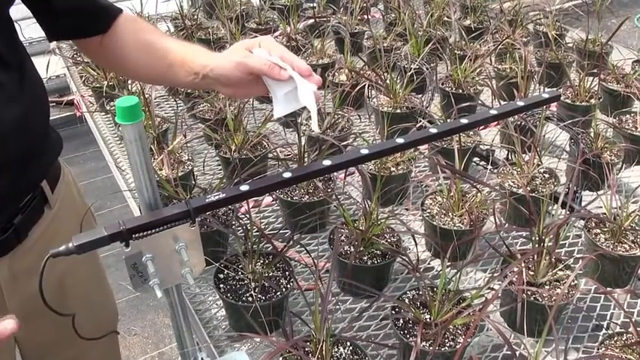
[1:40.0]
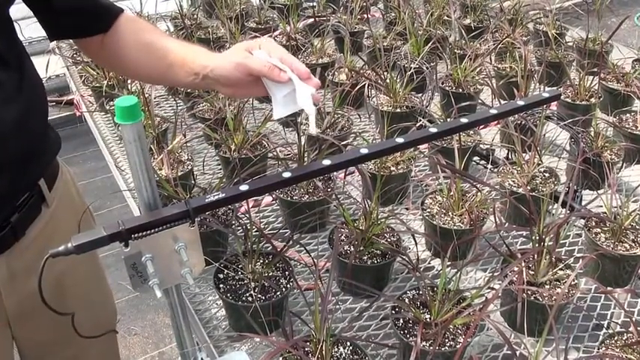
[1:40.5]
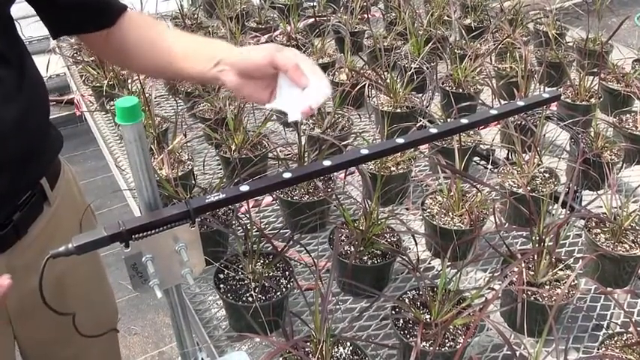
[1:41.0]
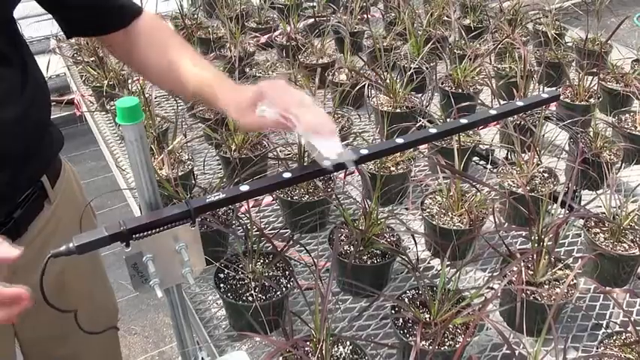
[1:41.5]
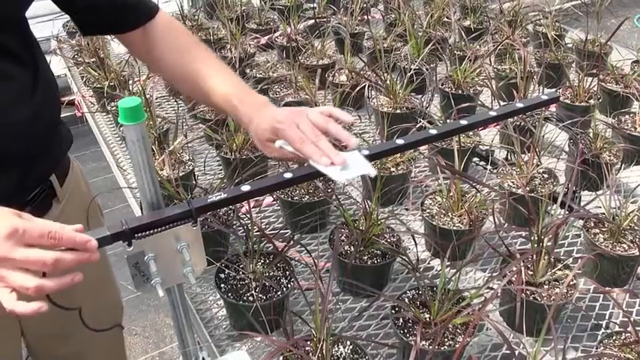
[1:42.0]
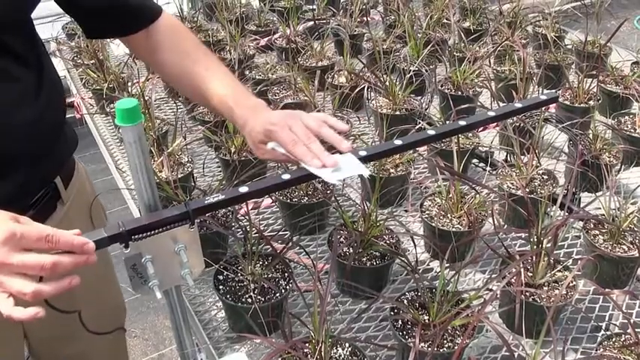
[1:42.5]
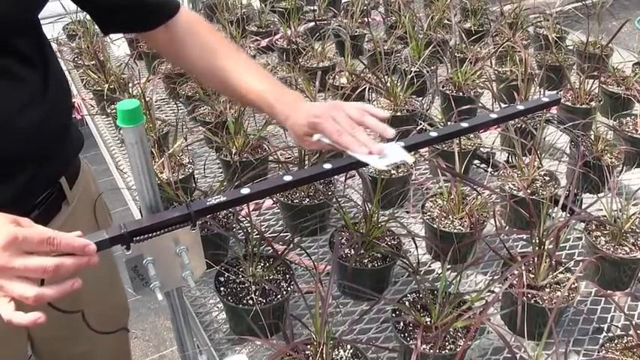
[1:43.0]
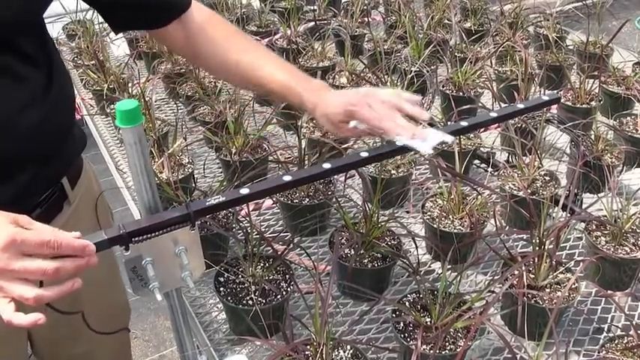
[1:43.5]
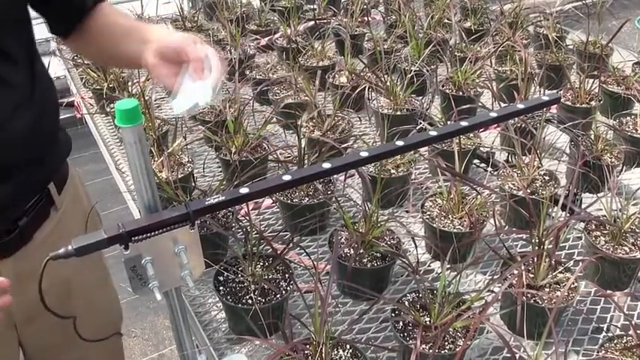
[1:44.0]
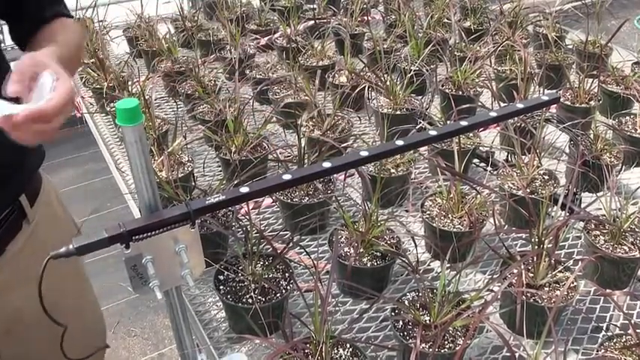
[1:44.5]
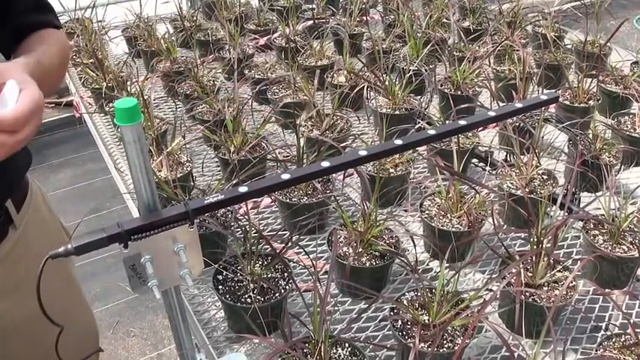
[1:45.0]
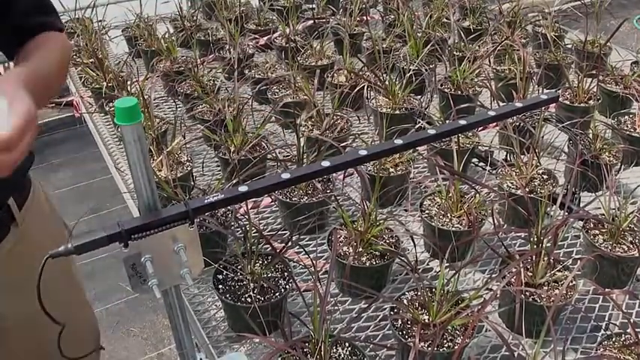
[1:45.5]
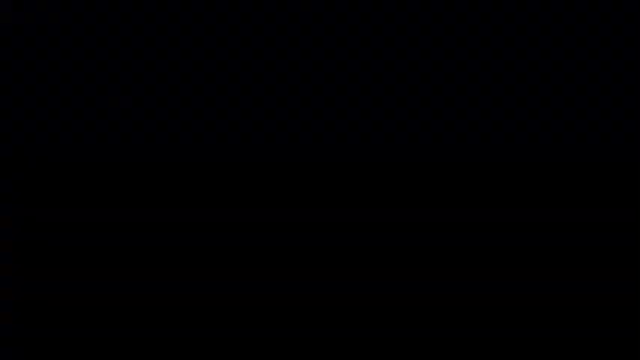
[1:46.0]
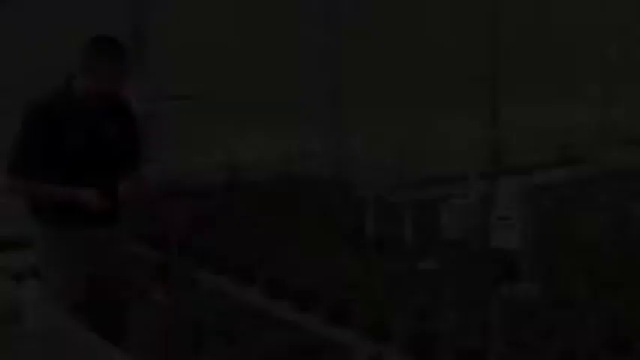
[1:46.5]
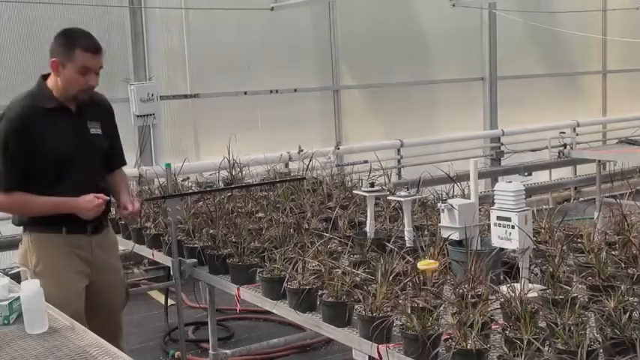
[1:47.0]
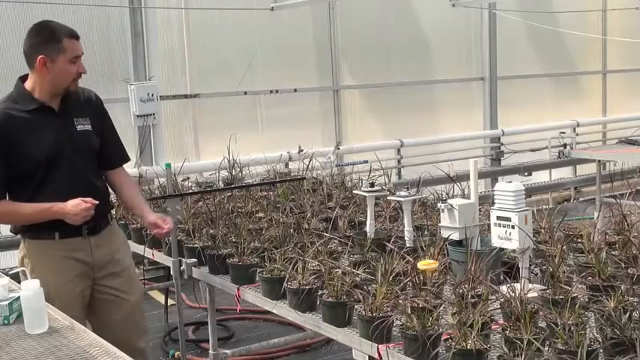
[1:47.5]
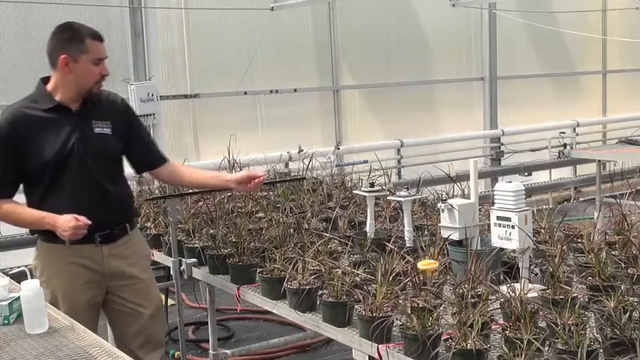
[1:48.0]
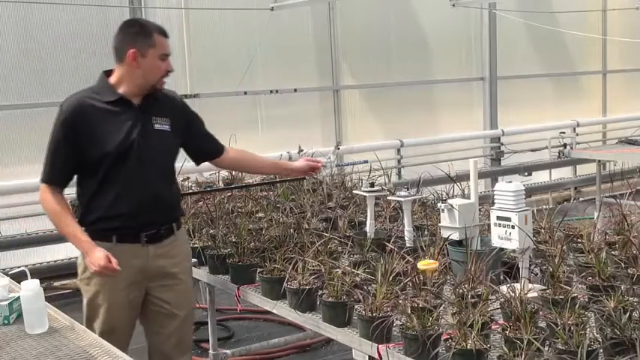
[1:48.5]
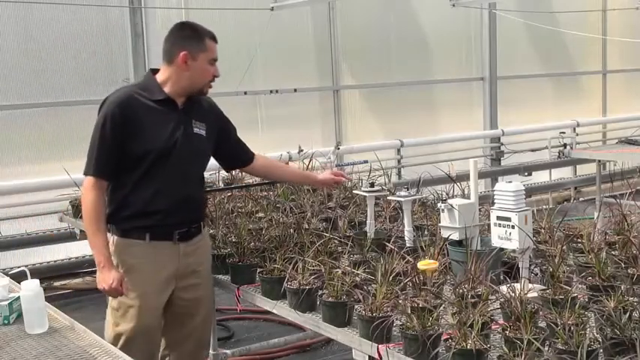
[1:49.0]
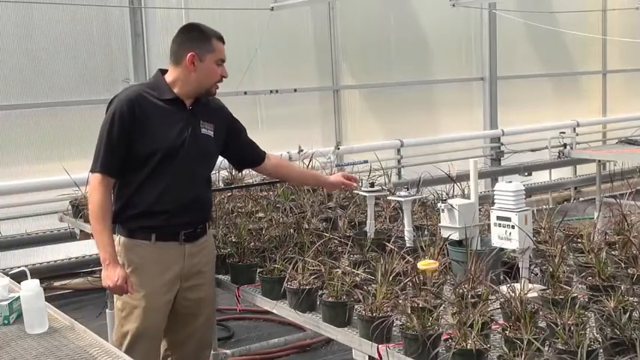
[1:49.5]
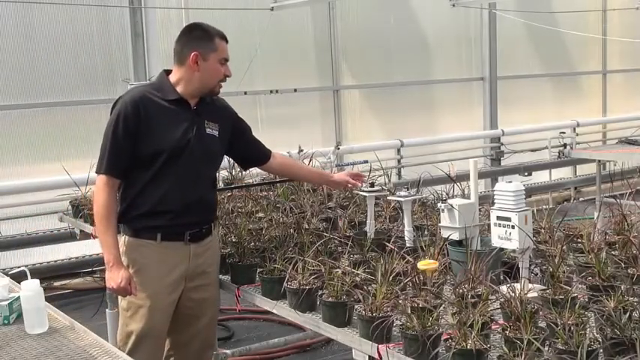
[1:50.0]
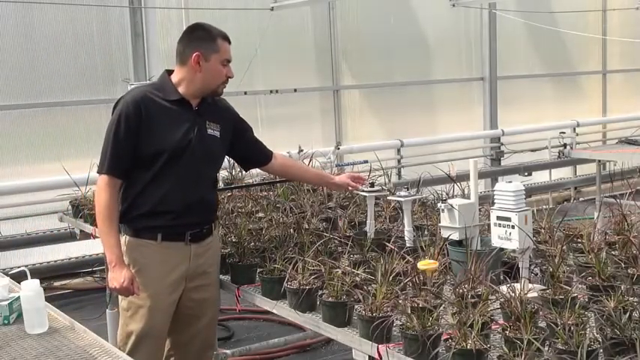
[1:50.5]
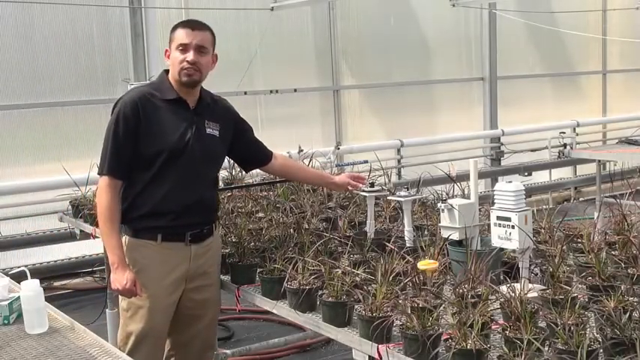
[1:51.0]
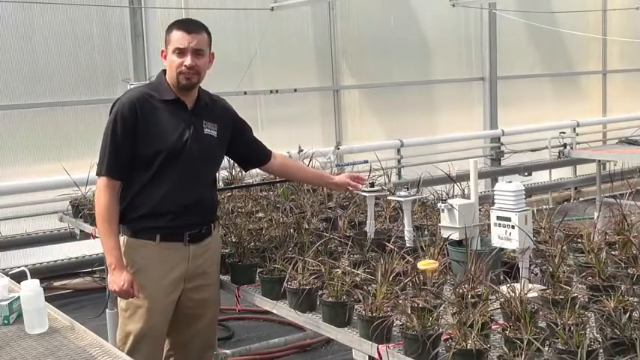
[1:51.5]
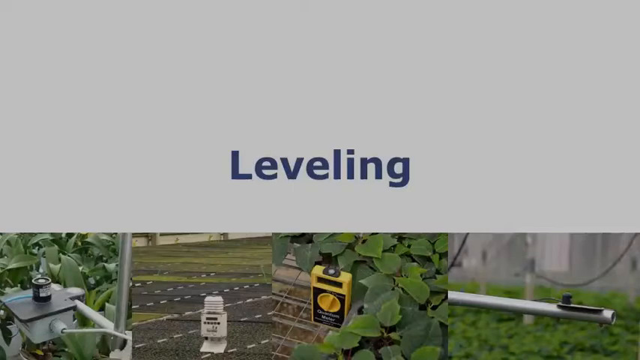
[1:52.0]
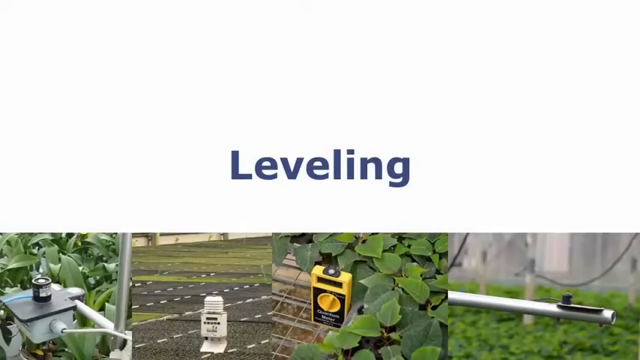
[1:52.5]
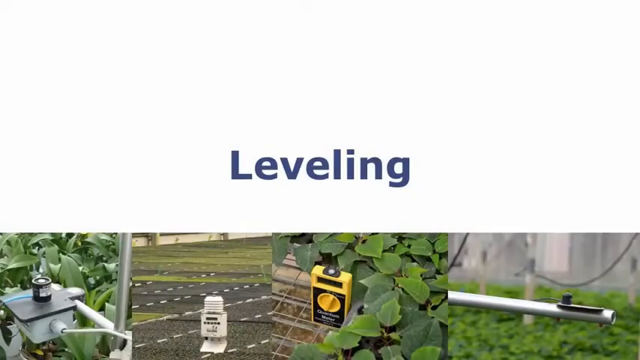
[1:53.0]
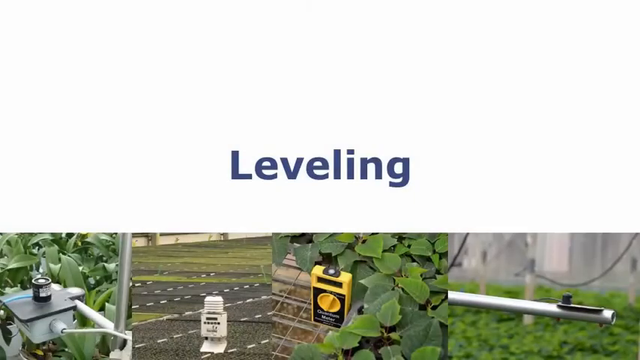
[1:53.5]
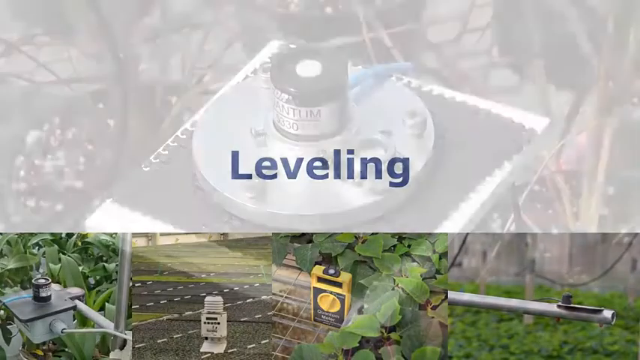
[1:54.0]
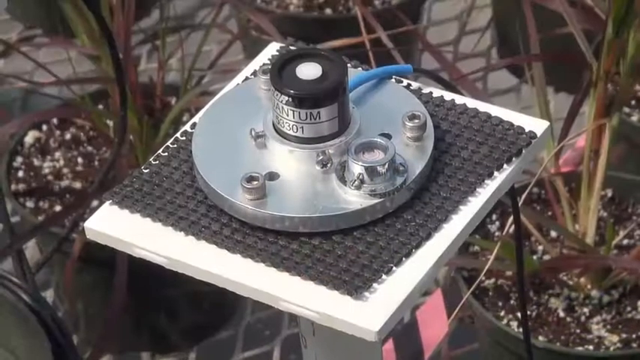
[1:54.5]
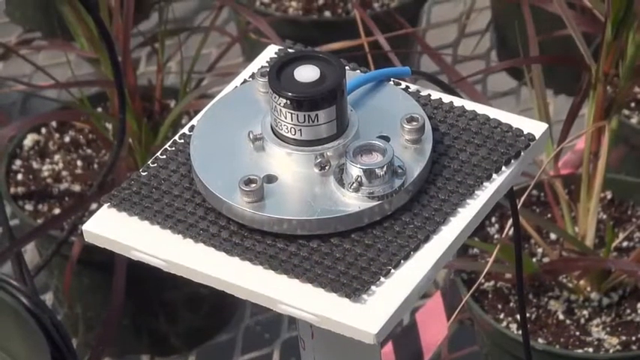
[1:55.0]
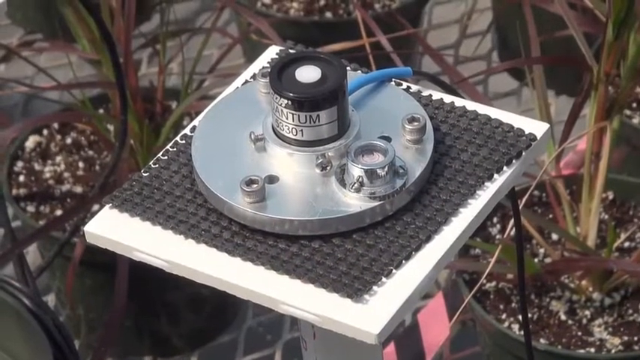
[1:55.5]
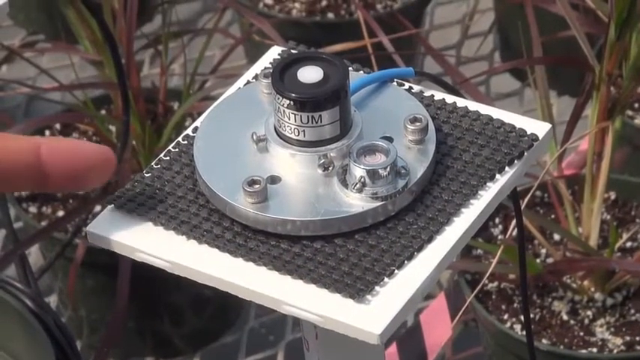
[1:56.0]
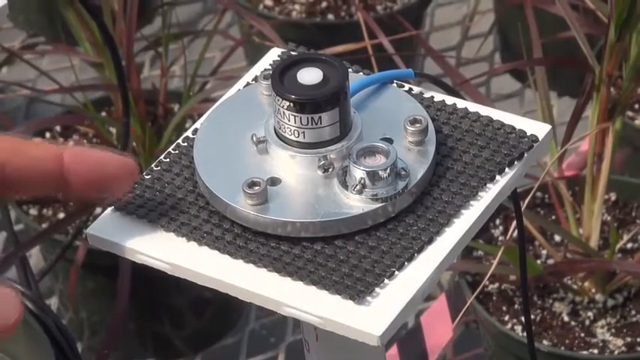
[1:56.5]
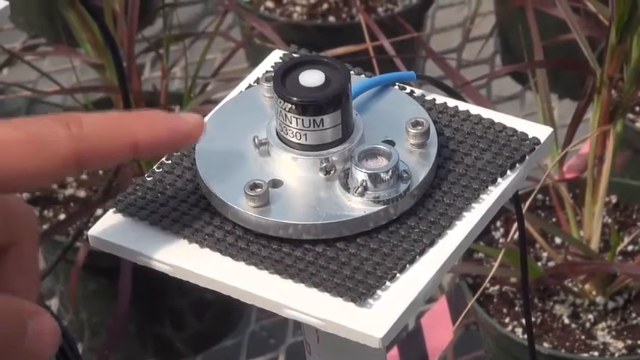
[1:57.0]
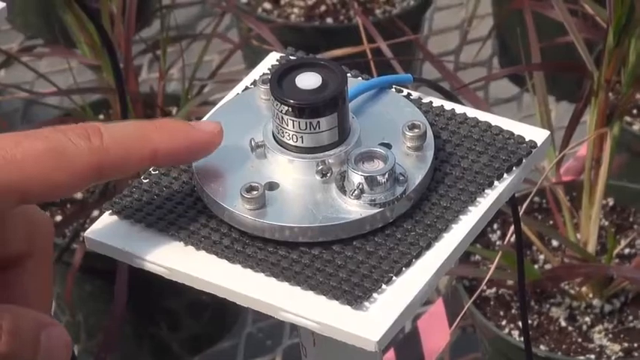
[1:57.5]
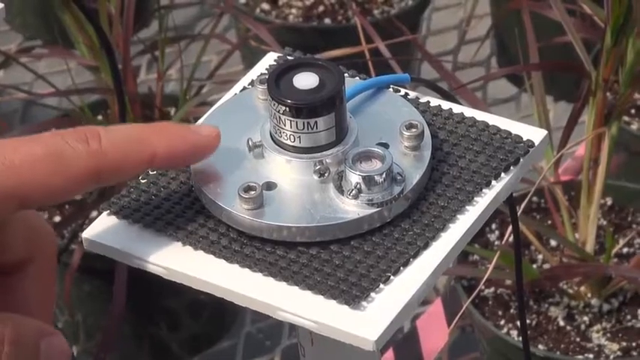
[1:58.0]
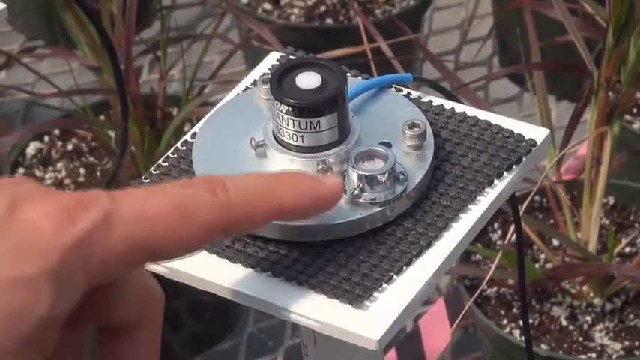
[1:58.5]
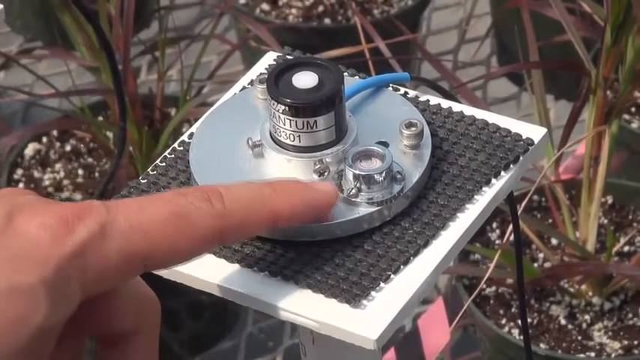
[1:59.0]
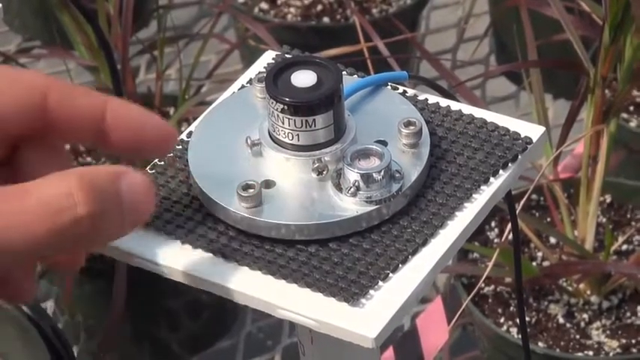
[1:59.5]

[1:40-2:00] The shot is zoomed in. His left hand holds the white cloth he squirted earlier, and he cleans the long black stick with white circles on it. A cord goes off to the bottom left-hand corner, possibly plugged in; the stick seems to be some type of electronic, apparently the light sensor. He wipes it down with his middle and pointer fingers on the cloth, his thumb holding underneath the cloth. With the other hand, he holds the stick in place with his pointer and middle fingers on the right side of the stick and his thumb in almost the same spot on the other side. He wipes it a couple of times and lifts it up. The screen goes black. He is then back without the cloth, using the hand that held it to touch a white pole. Blue text reads "Leveling," and the camera zooms in on what is apparently the quantum meter, with the letters "TUM," like the end of "quantum," visible on it.